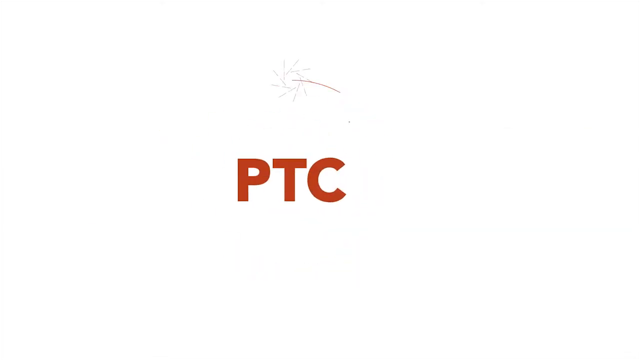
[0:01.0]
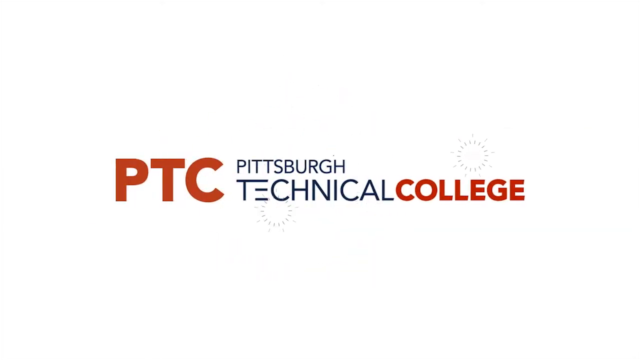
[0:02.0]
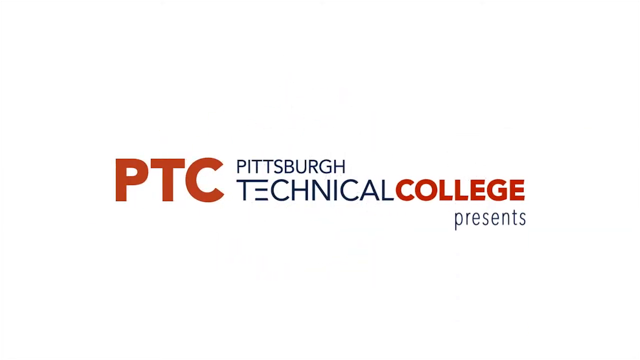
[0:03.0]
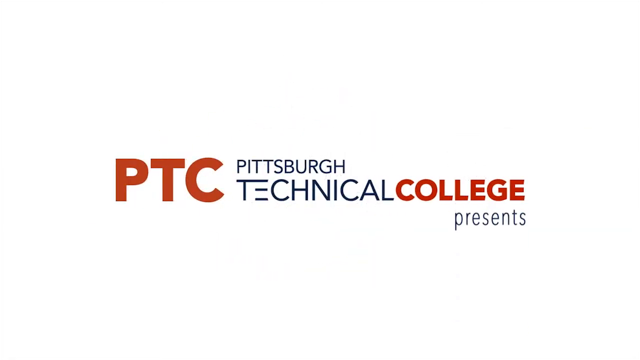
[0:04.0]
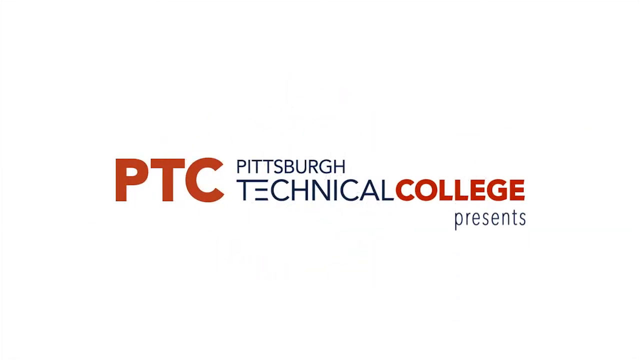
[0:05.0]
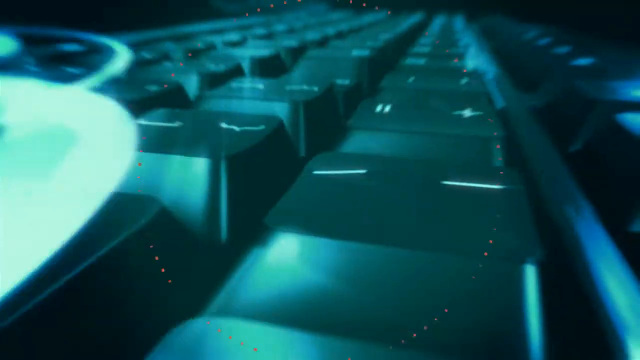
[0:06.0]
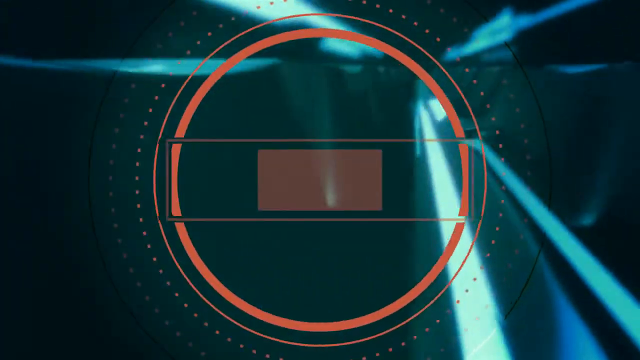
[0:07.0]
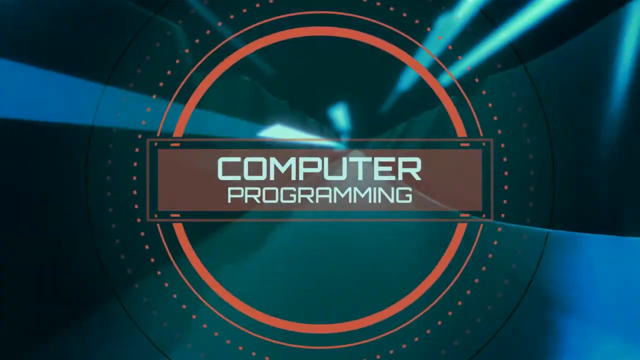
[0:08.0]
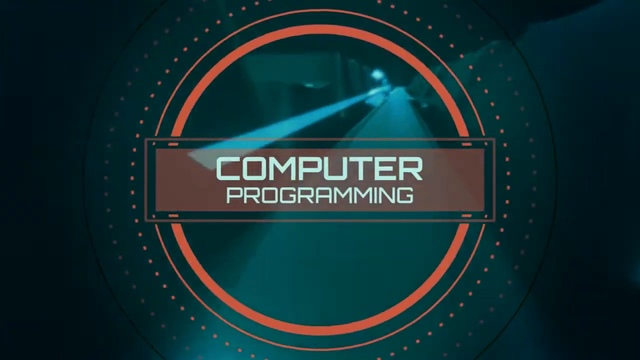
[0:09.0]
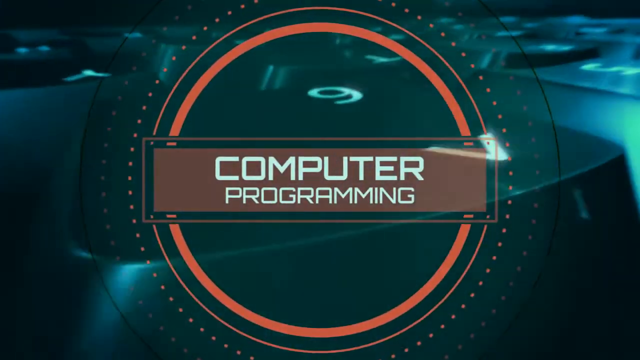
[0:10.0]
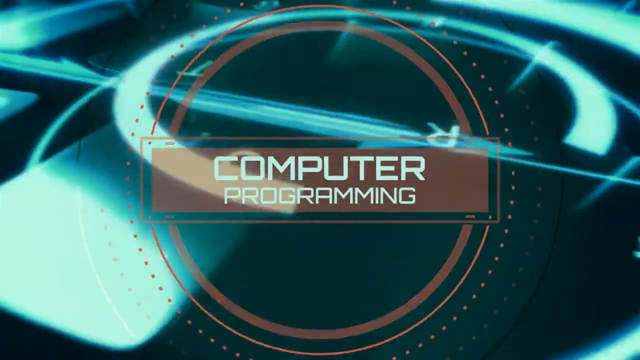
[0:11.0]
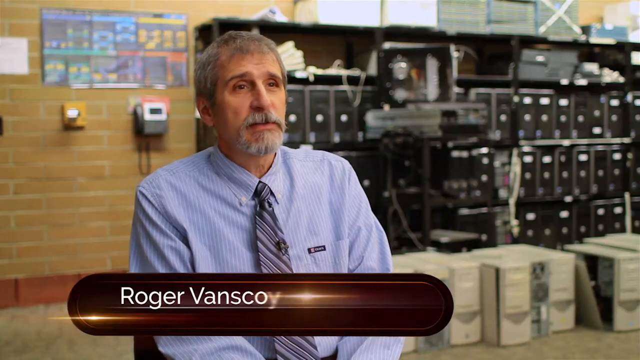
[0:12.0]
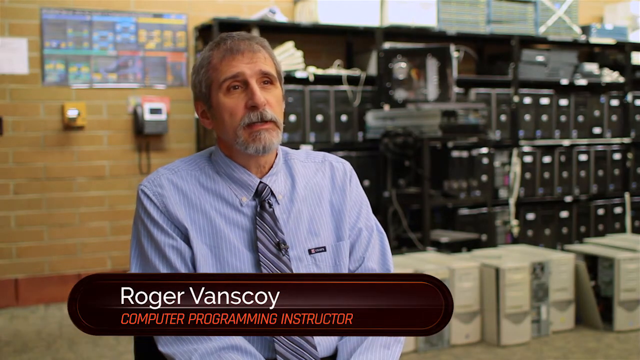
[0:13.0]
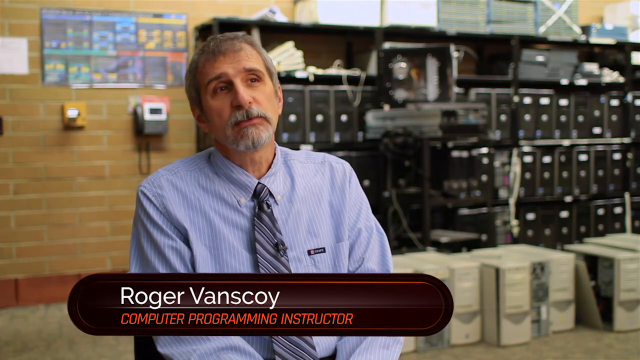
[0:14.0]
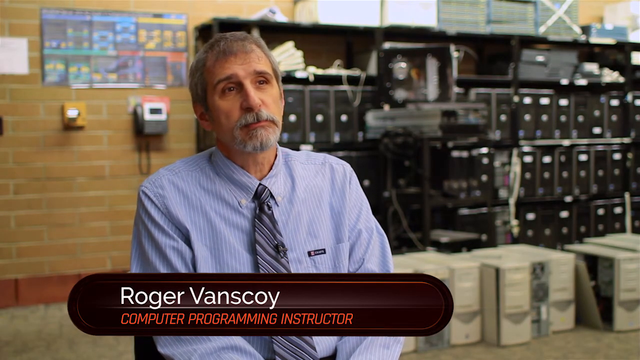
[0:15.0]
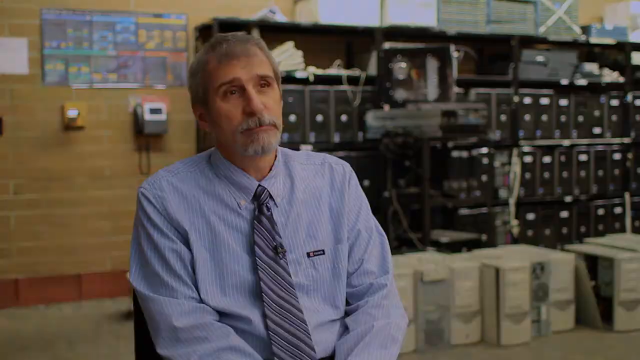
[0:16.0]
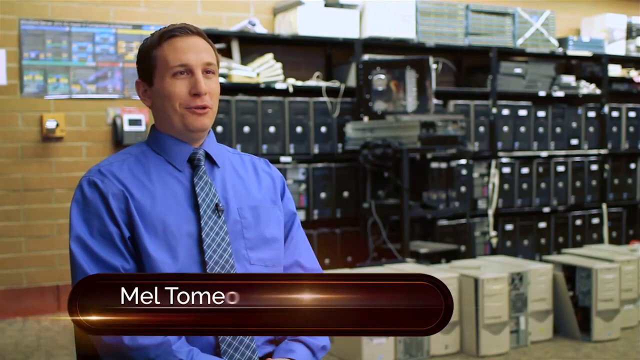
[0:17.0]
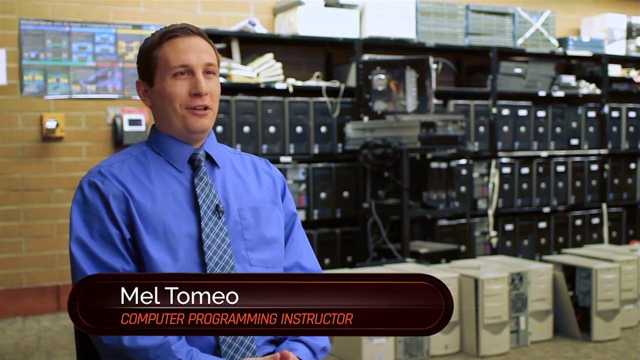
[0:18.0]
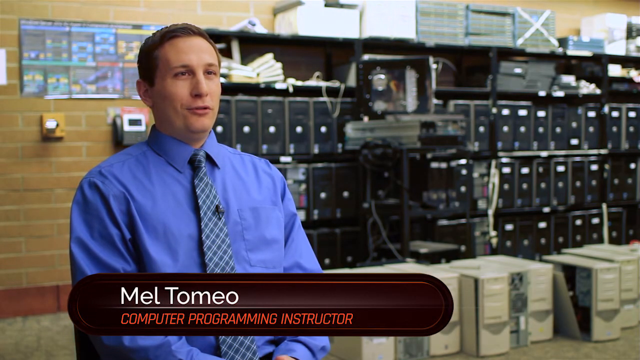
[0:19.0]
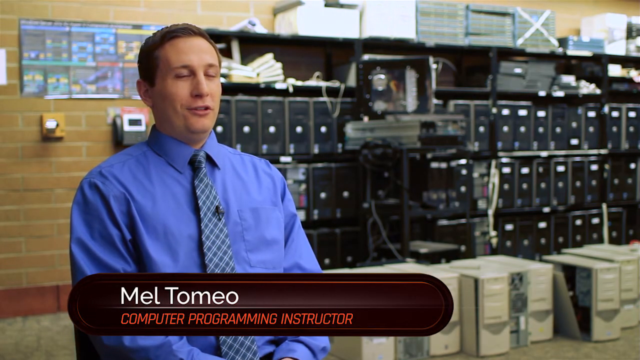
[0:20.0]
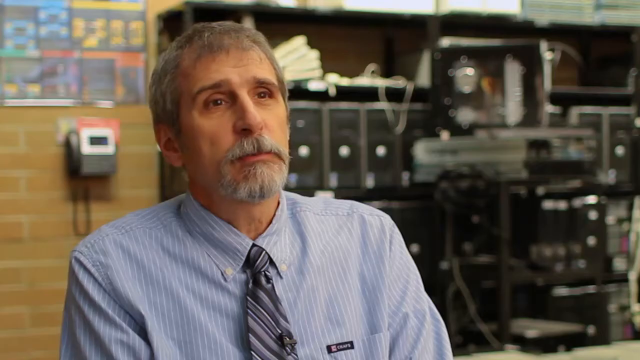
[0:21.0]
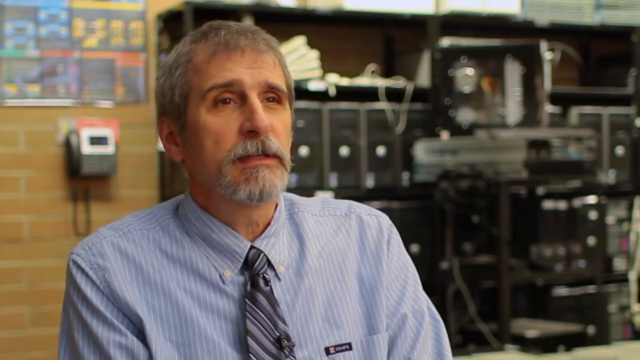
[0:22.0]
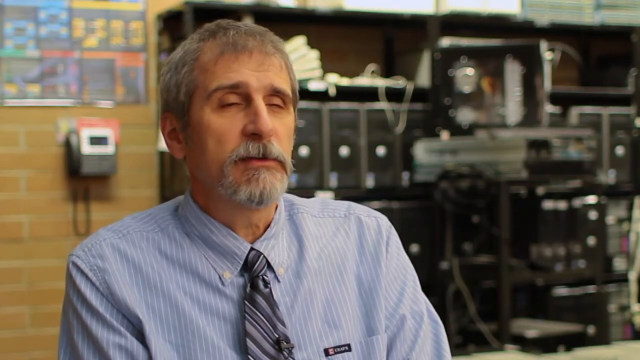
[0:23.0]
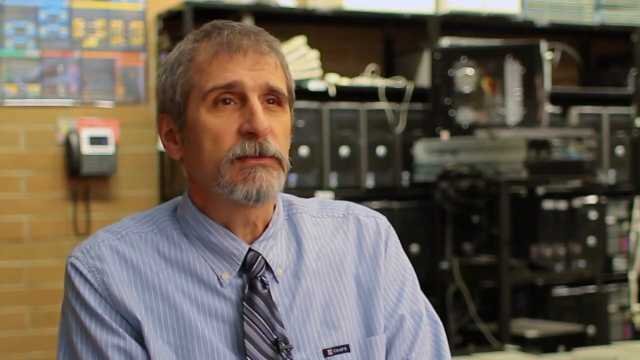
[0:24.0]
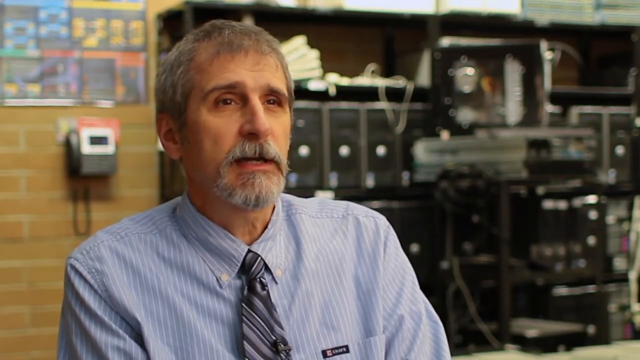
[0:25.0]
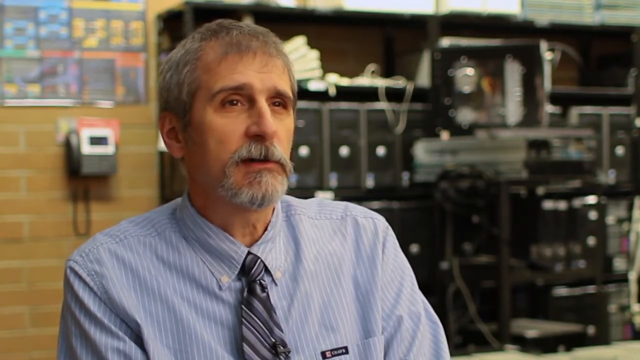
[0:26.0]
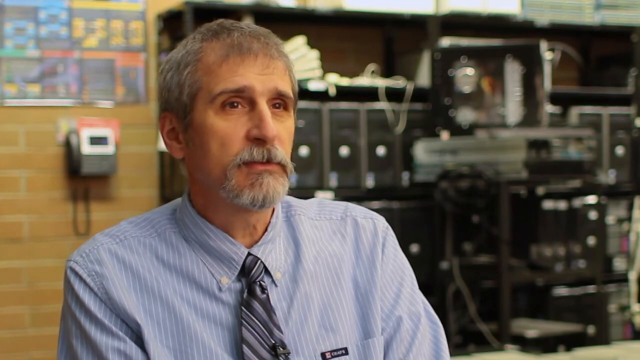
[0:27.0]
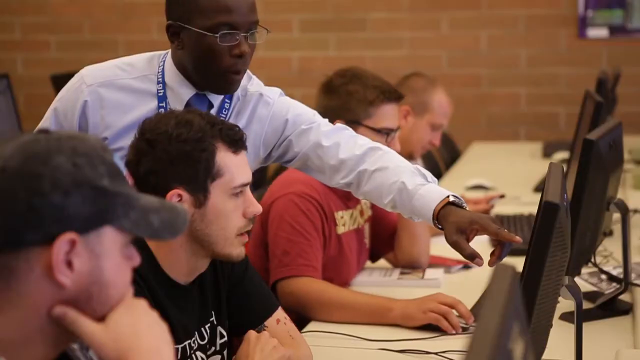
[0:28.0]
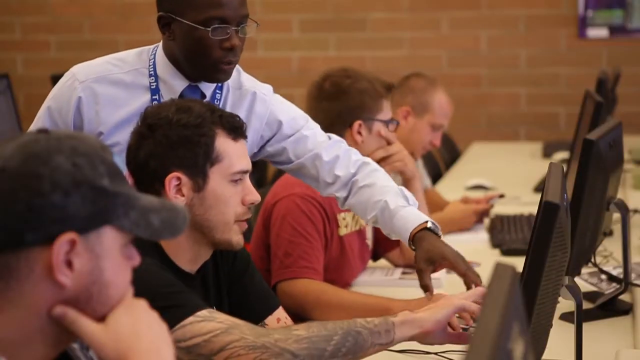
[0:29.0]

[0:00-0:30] The video appears to be for Pittsburgh Technical College. It opens with a graphic of "PTC" in red capital letters inside a circle. The circle disappears and "PTC" moves to the left; then "PITTSBURGH" appears in black capital letters, with "technical" in slightly larger small text beneath it and "college" in red to the right of that. The E in the black "technical" has no vertical bar, which makes it a little unusual. Directly under "college", in small text, is the word "presents". A close-up of a keyboard follows, with illuminated teal and dark gray colors moving around as an intro graphic, then an orange circle and a brown text banner reading "computer programming" in white capitals. The video turns to a man who looks like an expert in computer programming, positioned a little left of center. He wears a lavender button-down shirt with a tie of diagonal stripes in different shades of lavender, has a gray mustache, a short beard and short gray hair, and is probably about 60 years old. He is sitting apparently in front of a computer server, with computer electronic equipment behind him. A black text box at the bottom gives his name, Roger Vanscoy, in white font, and a burgundy, round-cornered box in red text identifies him as a computer programming instructor. The video switches to another computer programming instructor, Mel Tomeo, sitting in the exact same spot. He is Caucasian with brown hair, probably about 40 years old, and wears a blue shirt and a blue tie with white stripes going diagonally both ways; he talks to the camera. The video goes back to Roger, now with no text at the bottom, talking to the viewer. Next comes what looks like a class of computer programmers in a classroom: an instructor who is black, wearing glasses, a white button-down shirt, a blue lanyard and a blue tie, reaches across a student and points at the computer screen, while four students look at computer screens.